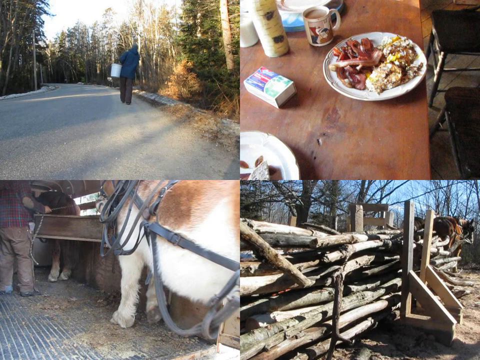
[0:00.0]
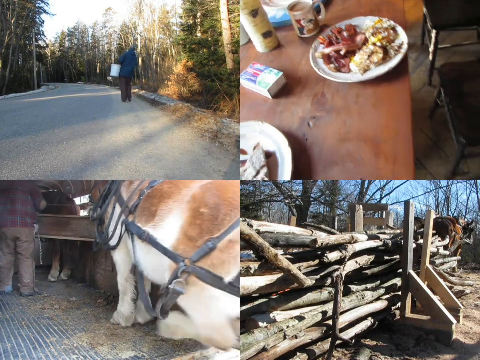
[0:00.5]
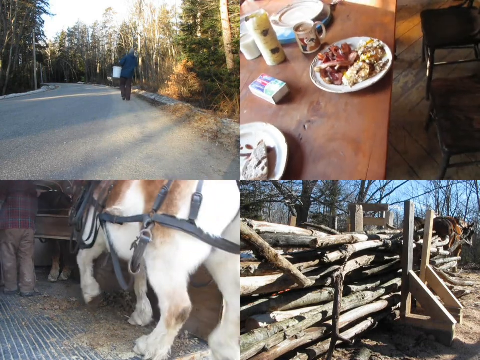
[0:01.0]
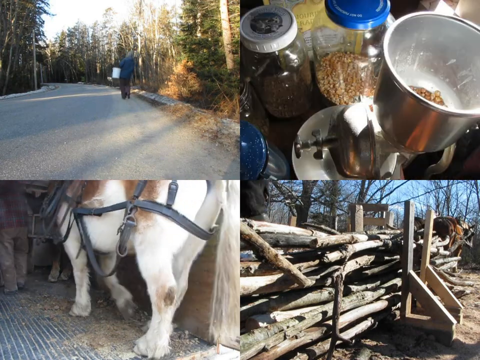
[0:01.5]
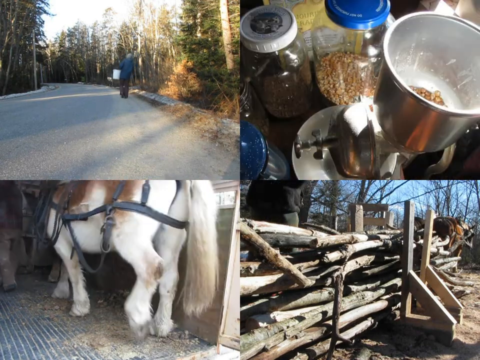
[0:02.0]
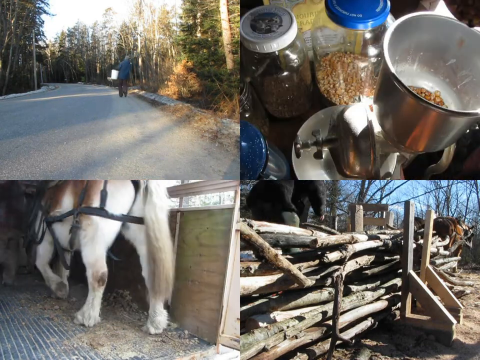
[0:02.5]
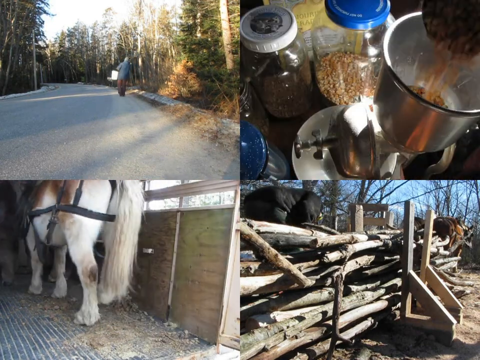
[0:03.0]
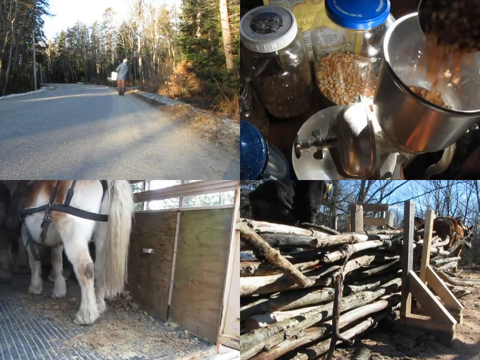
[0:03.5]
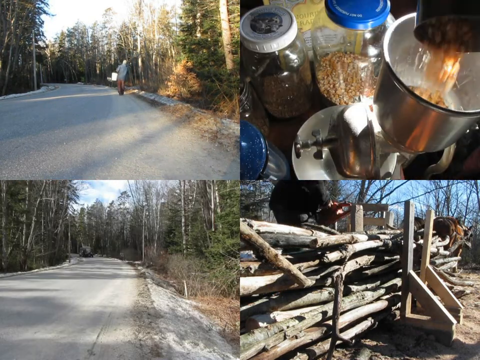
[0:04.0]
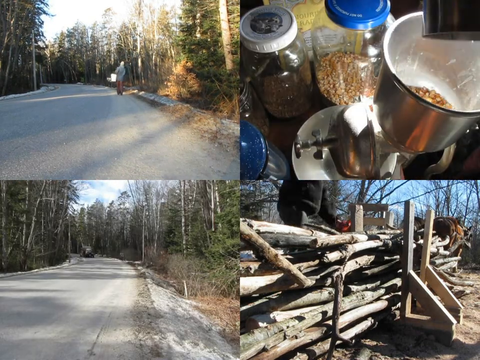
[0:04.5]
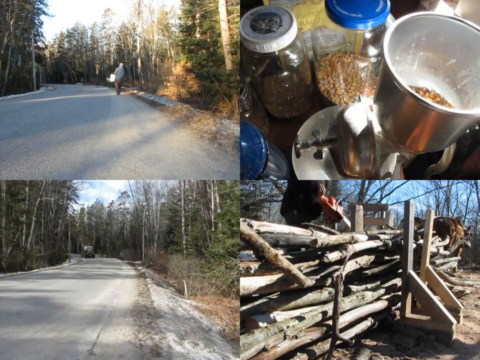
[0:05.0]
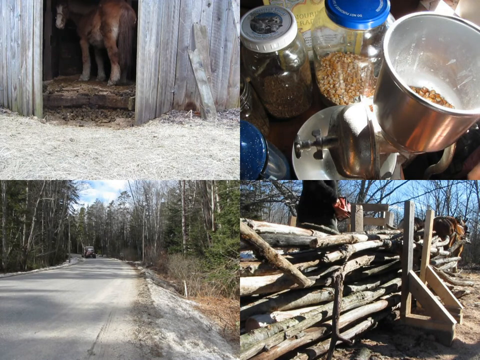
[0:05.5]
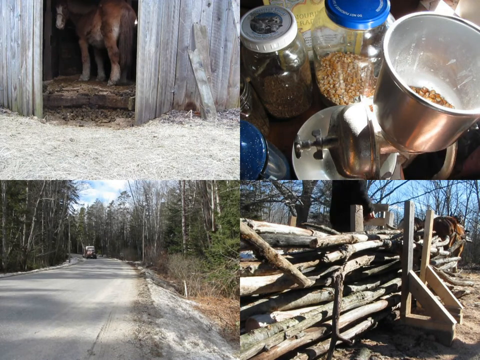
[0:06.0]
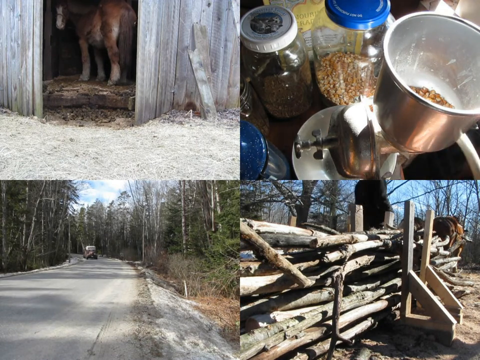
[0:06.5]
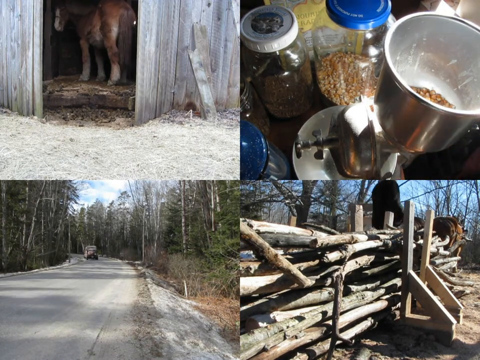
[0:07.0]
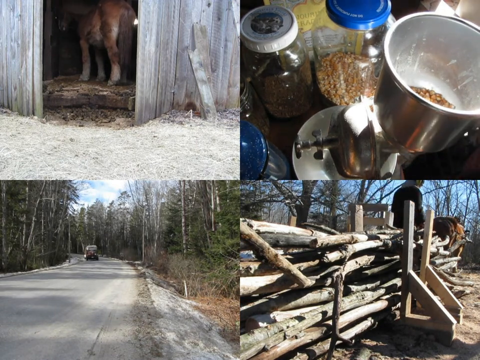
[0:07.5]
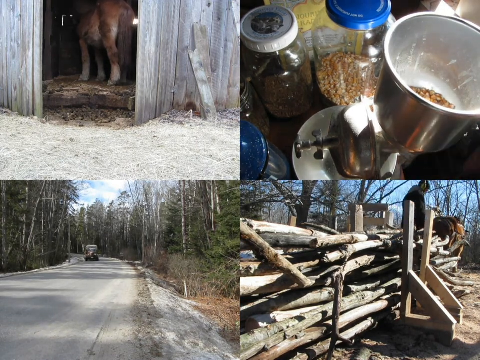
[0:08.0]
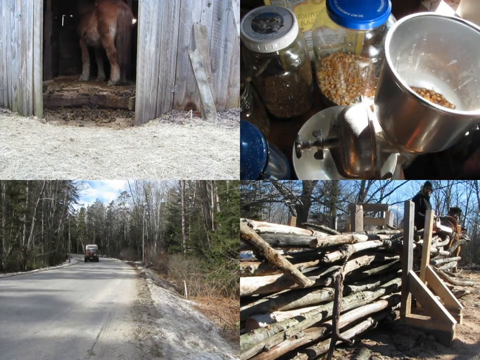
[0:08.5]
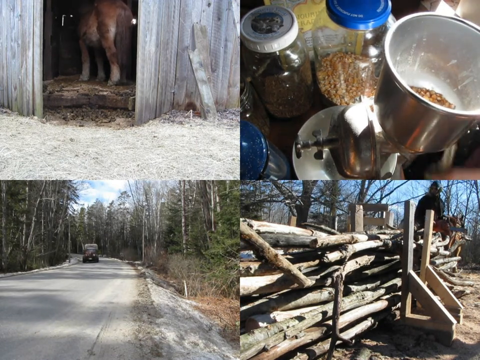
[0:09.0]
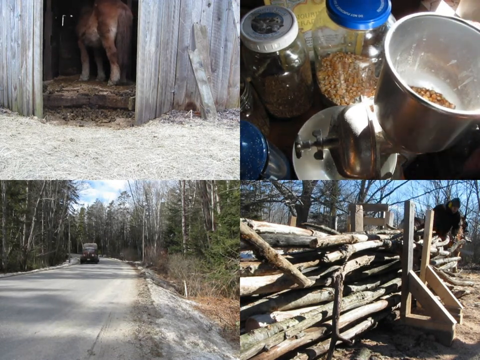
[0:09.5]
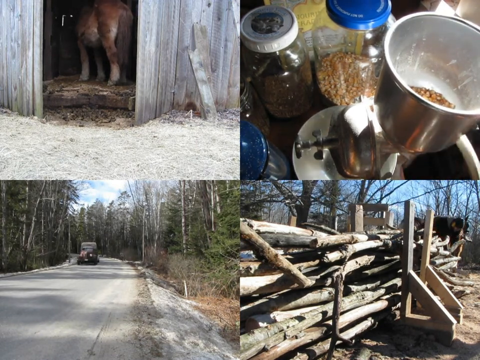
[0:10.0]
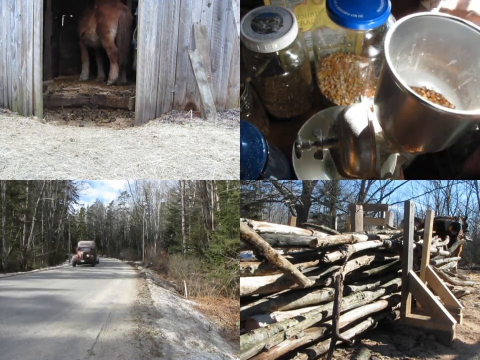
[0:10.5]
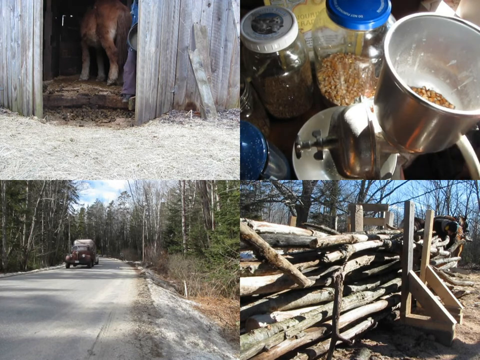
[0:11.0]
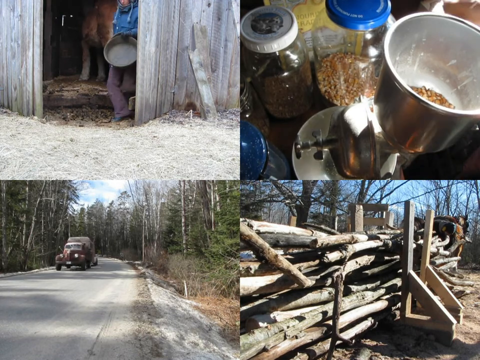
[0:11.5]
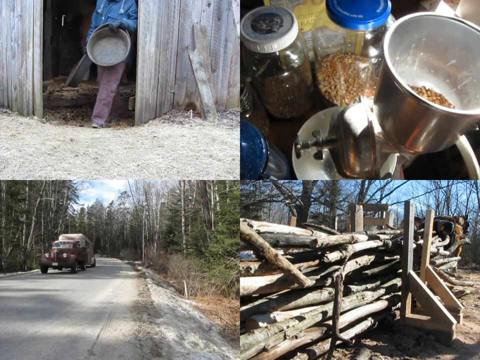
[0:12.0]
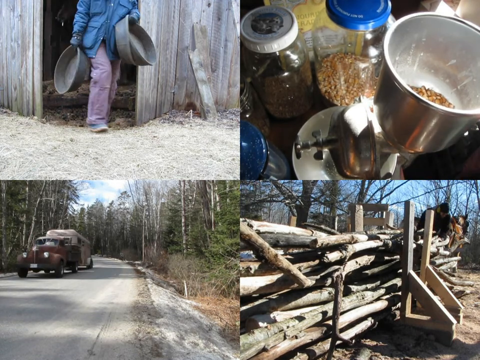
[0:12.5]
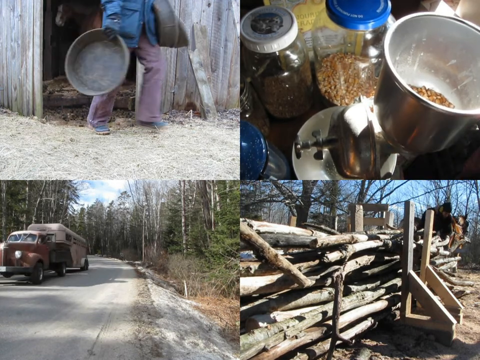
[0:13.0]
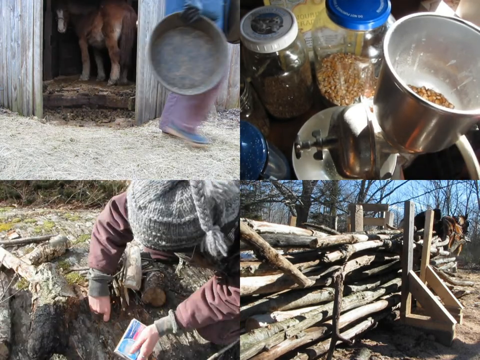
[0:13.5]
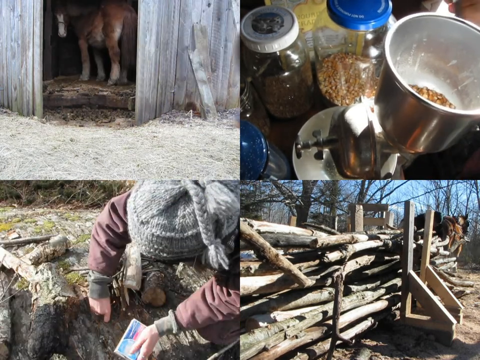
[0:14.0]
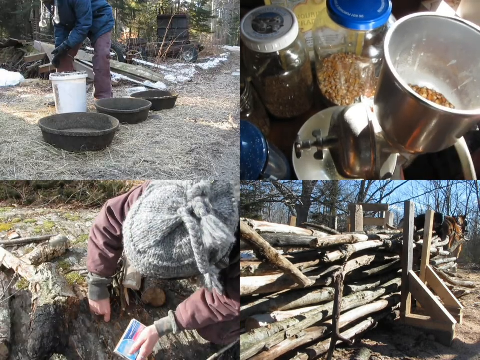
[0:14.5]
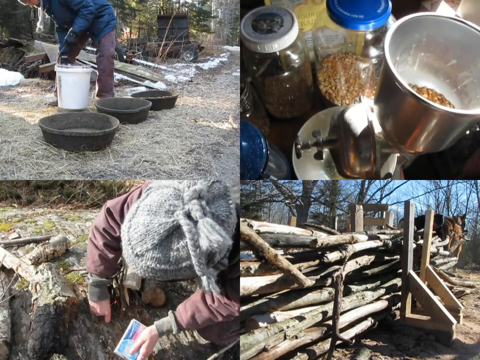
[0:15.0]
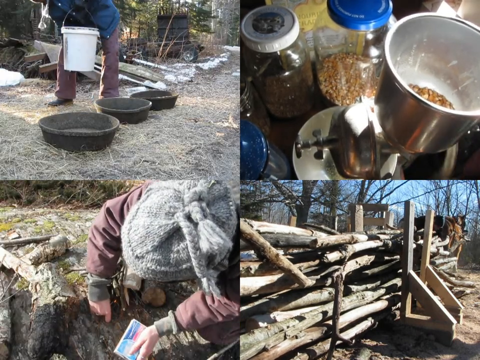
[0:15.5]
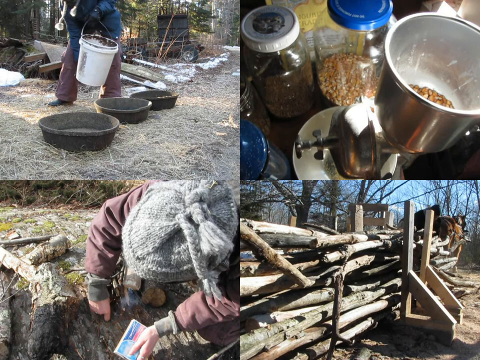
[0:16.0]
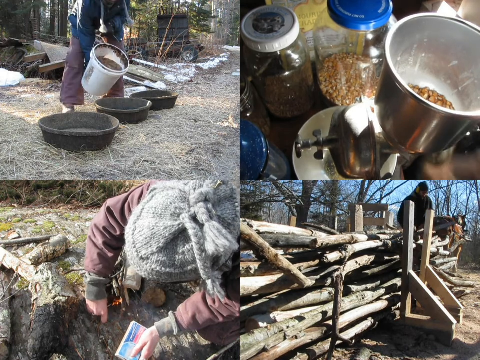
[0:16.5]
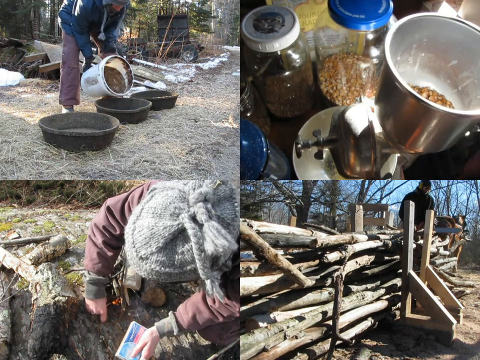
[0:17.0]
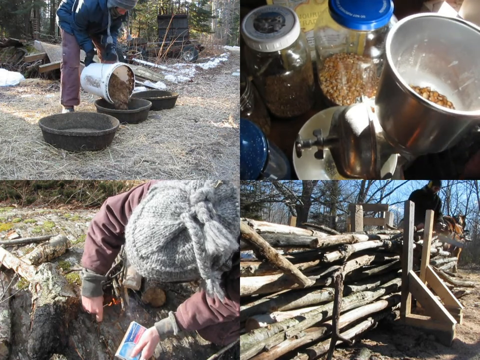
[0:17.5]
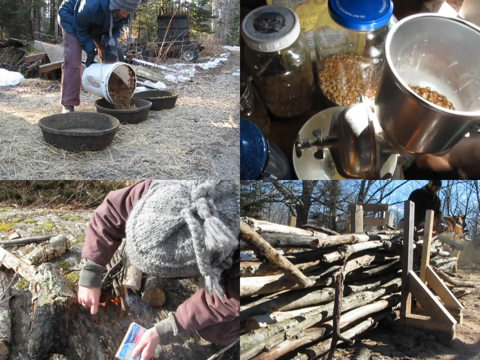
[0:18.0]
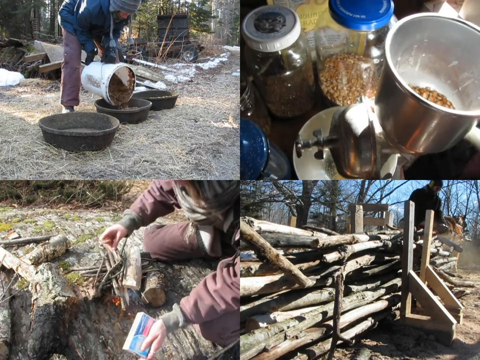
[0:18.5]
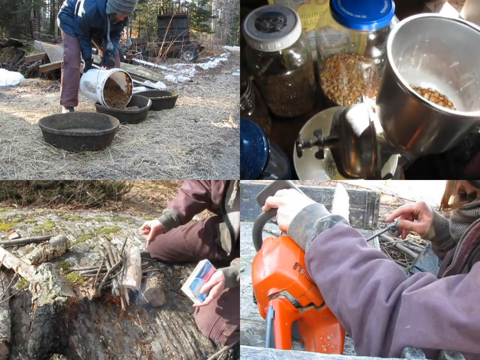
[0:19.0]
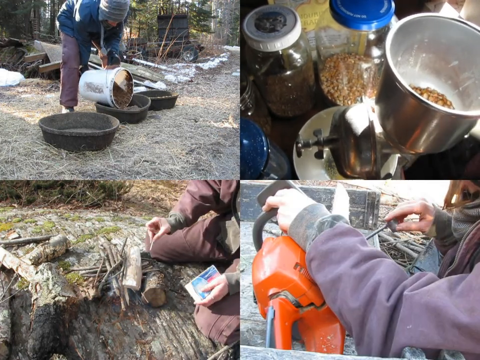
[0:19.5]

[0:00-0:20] The screen is split into four sections, showing someone in a blue jacket walking along a road, a plate of food on a table, a small horse, and a stack of wood. The video of the person walking moves from the top left of the screen down to an image of the road in the bottom left, and the horse moves from the bottom left to the top left. The top right section, which shows the breakfast, changes to someone preparing popcorn in a metal pot, pouring the kernels into the pot. The bottom right section shows a stack of wood piled up in a wooden stand, with a man using a chainsaw to cut smaller pieces off the wood.